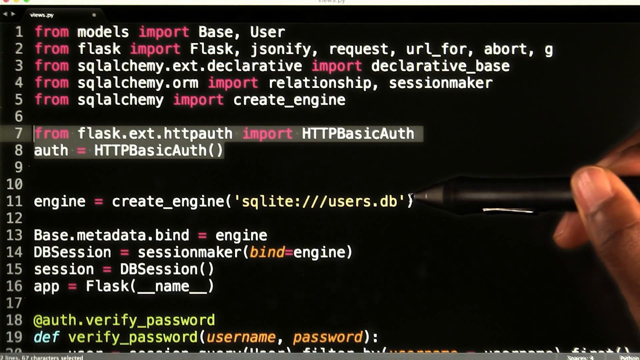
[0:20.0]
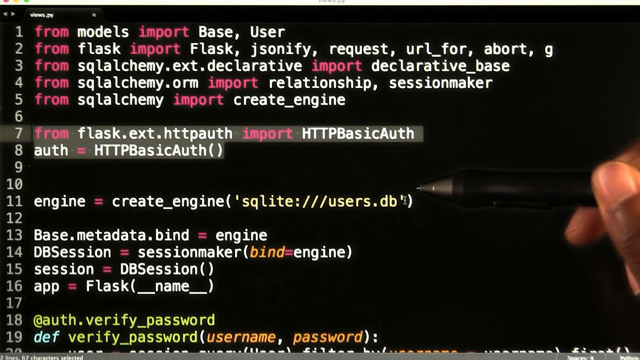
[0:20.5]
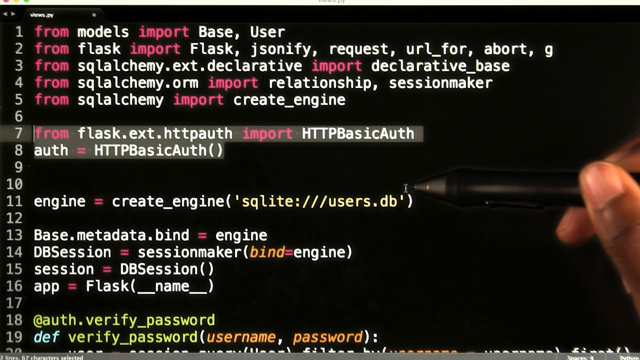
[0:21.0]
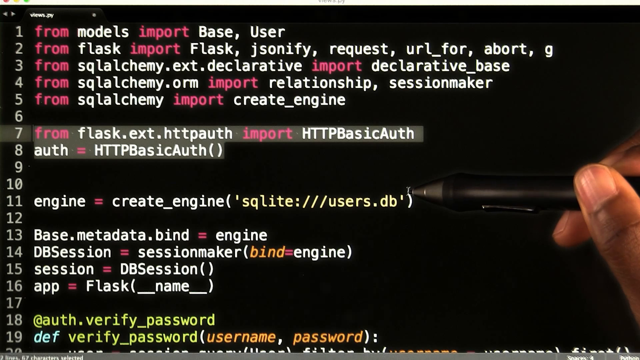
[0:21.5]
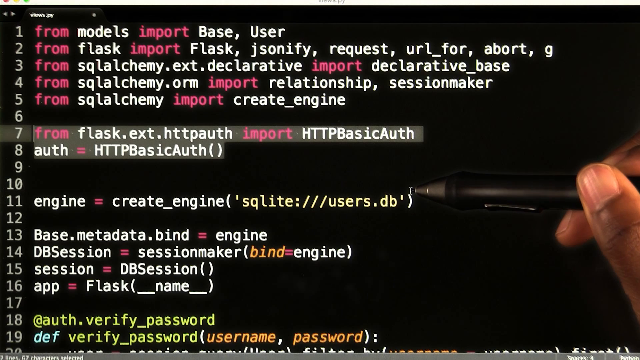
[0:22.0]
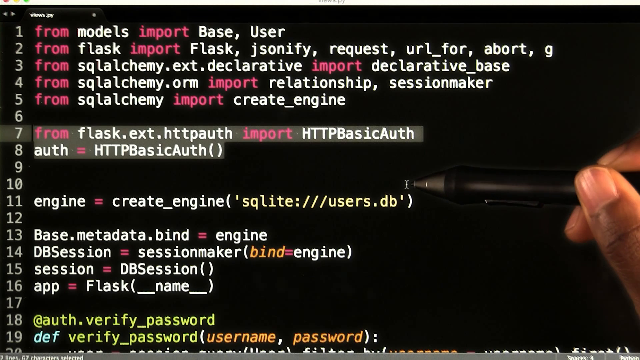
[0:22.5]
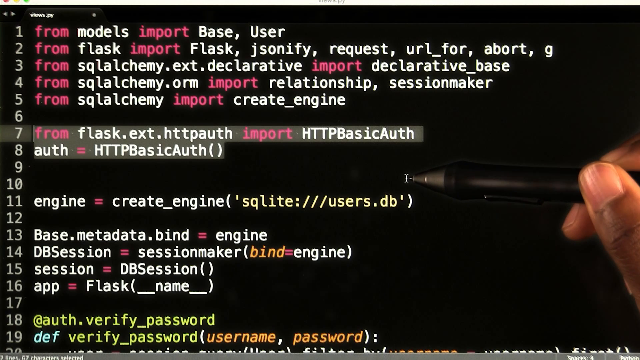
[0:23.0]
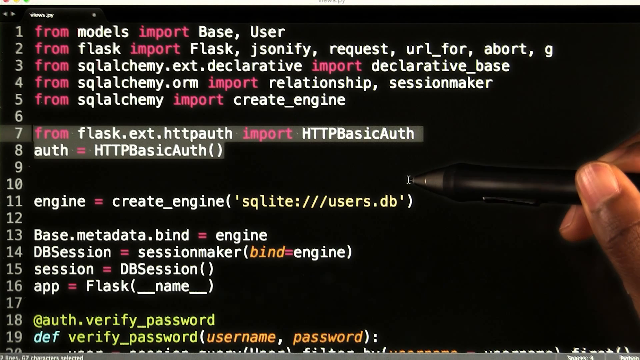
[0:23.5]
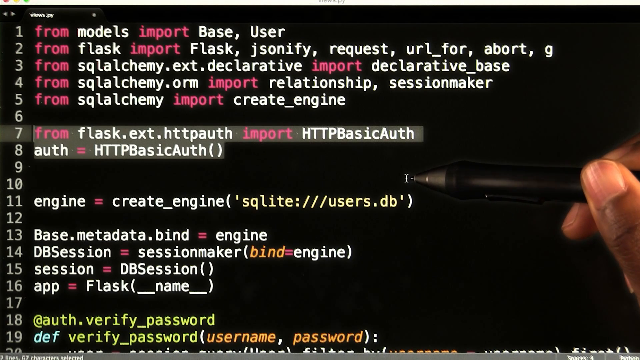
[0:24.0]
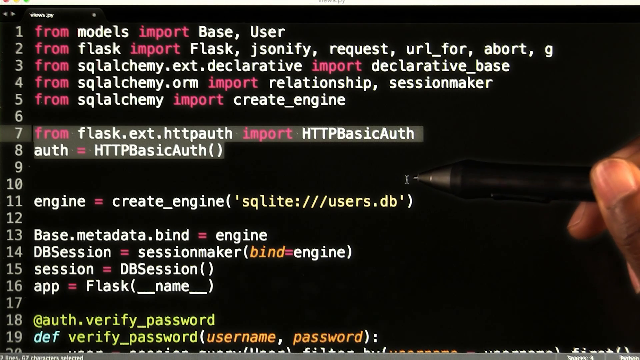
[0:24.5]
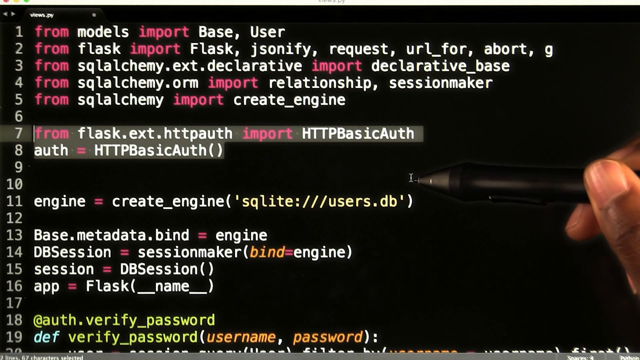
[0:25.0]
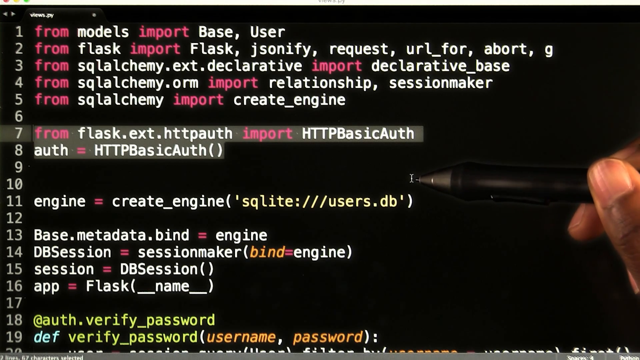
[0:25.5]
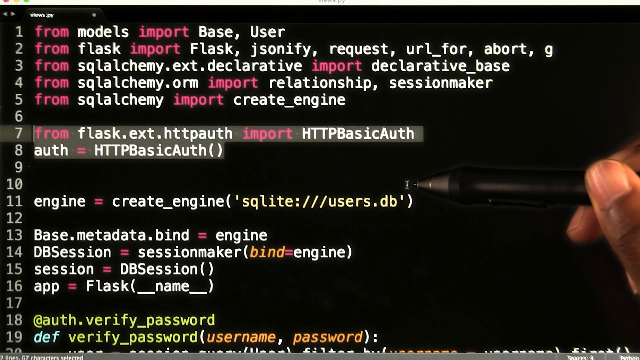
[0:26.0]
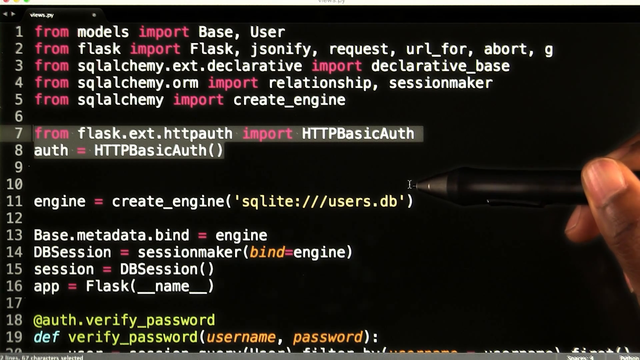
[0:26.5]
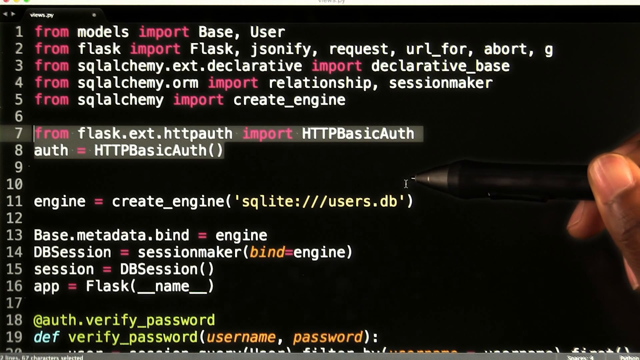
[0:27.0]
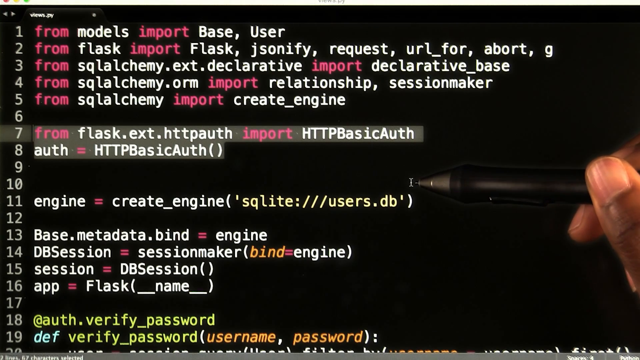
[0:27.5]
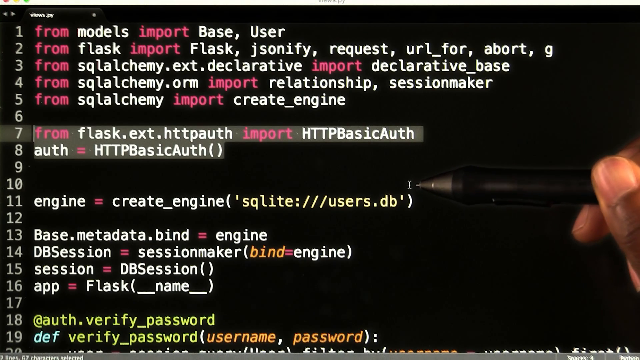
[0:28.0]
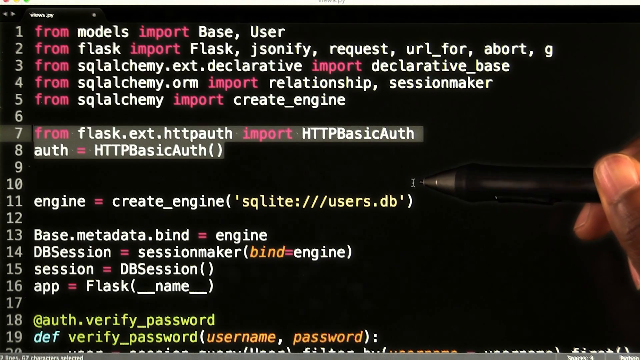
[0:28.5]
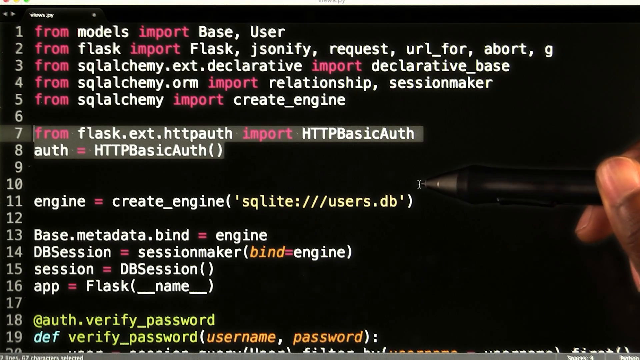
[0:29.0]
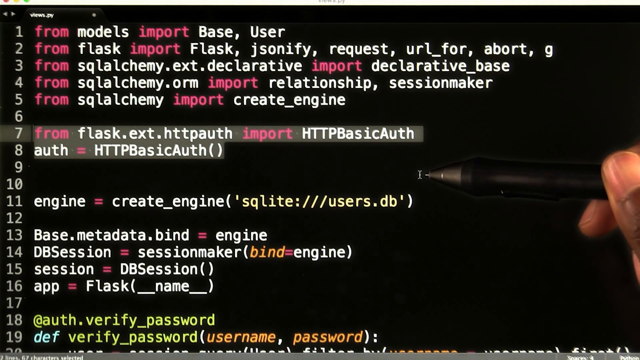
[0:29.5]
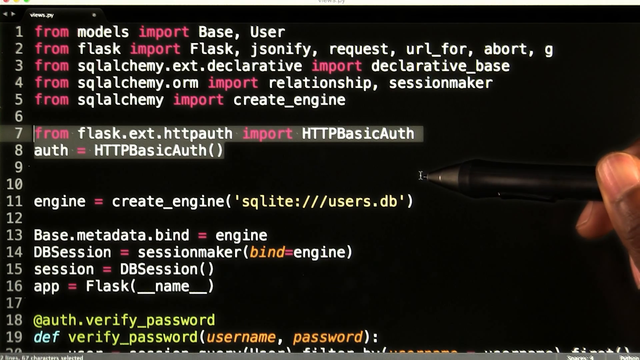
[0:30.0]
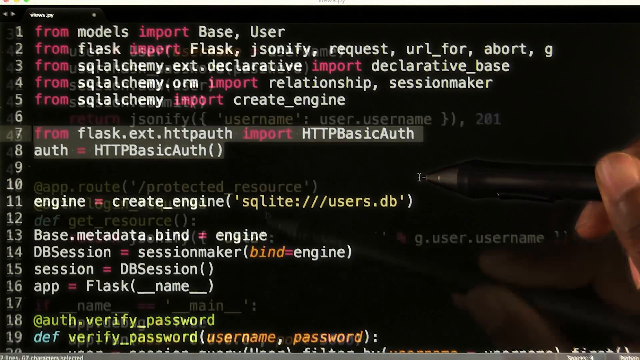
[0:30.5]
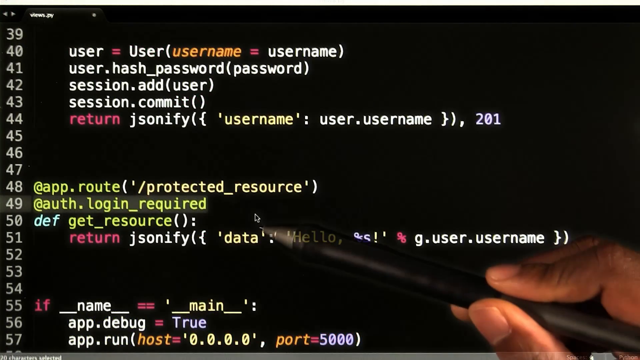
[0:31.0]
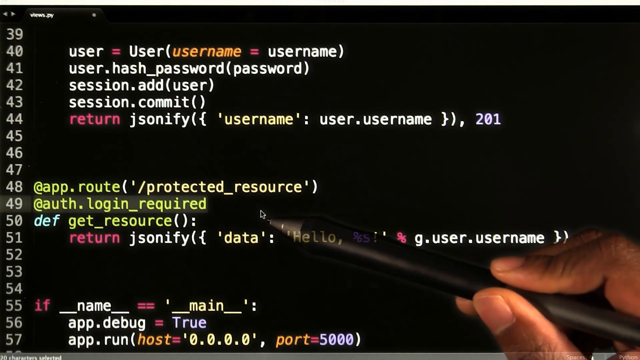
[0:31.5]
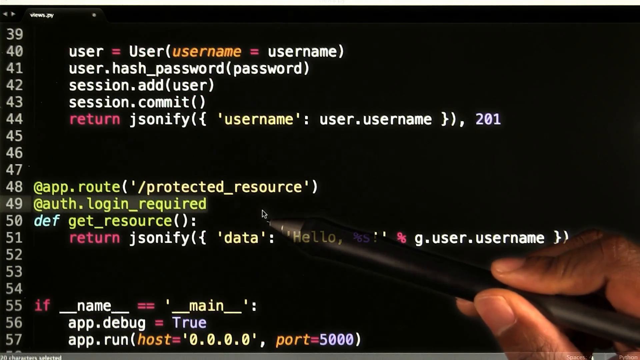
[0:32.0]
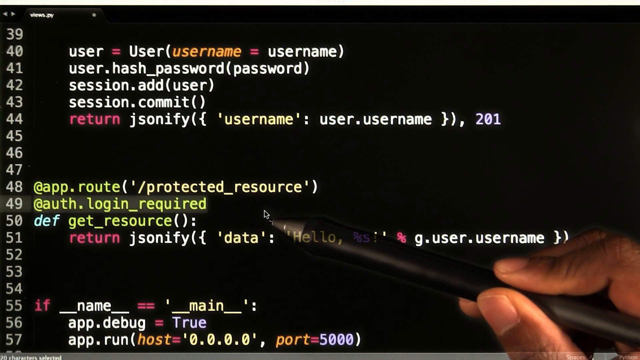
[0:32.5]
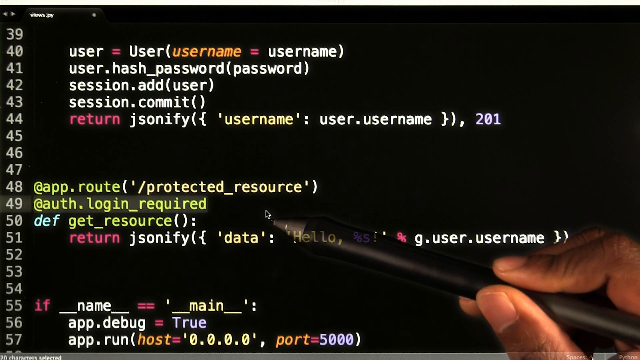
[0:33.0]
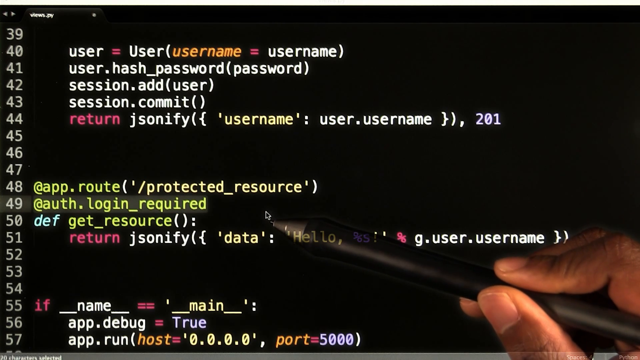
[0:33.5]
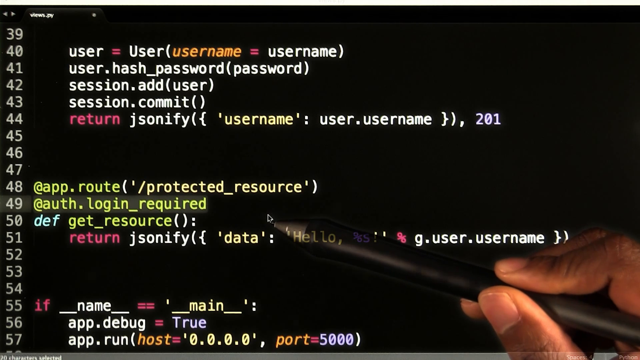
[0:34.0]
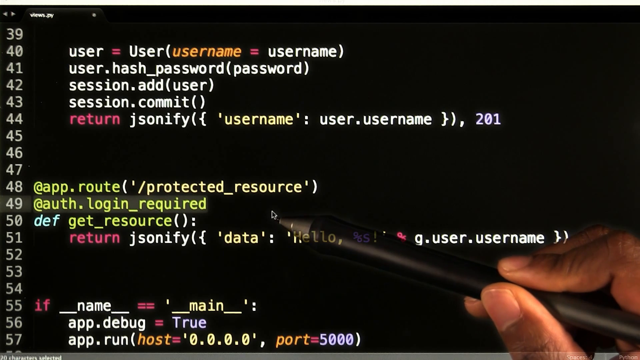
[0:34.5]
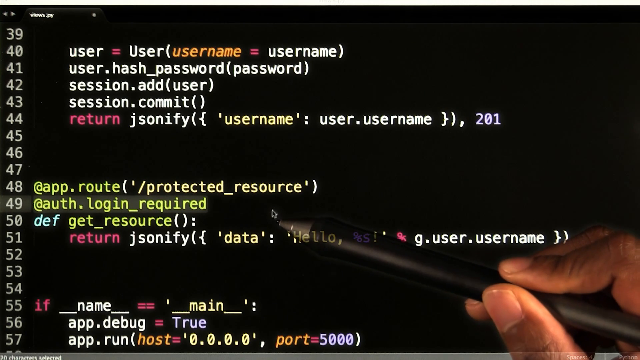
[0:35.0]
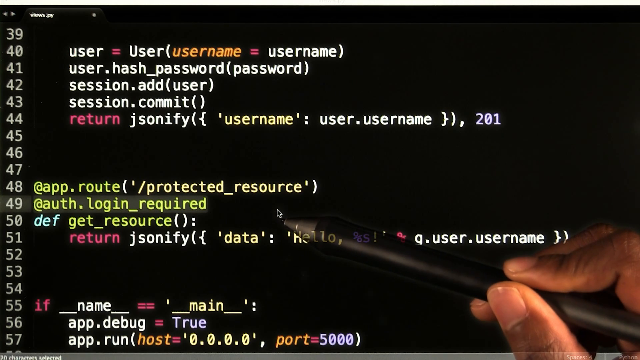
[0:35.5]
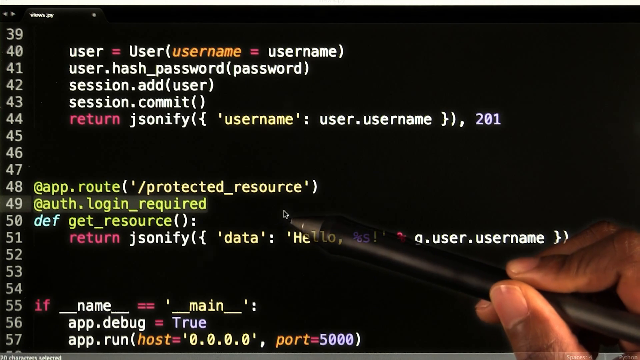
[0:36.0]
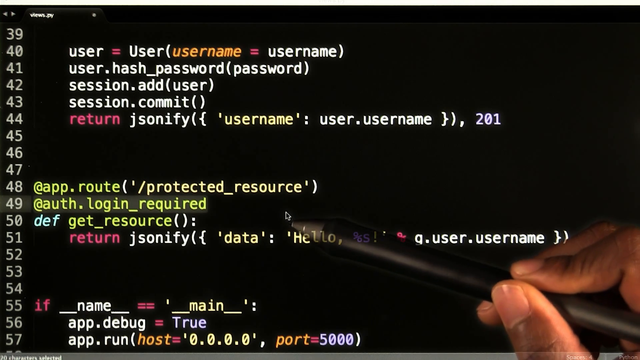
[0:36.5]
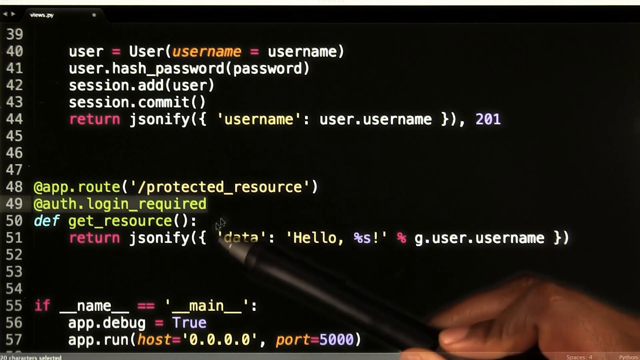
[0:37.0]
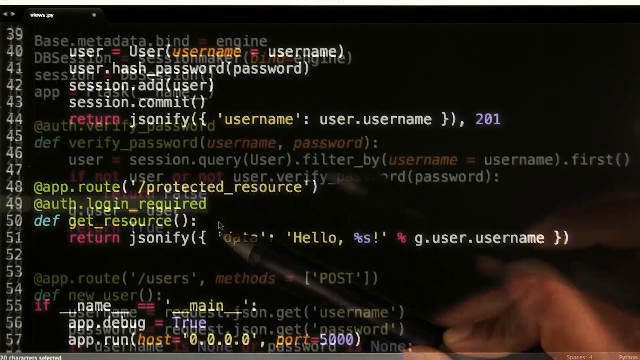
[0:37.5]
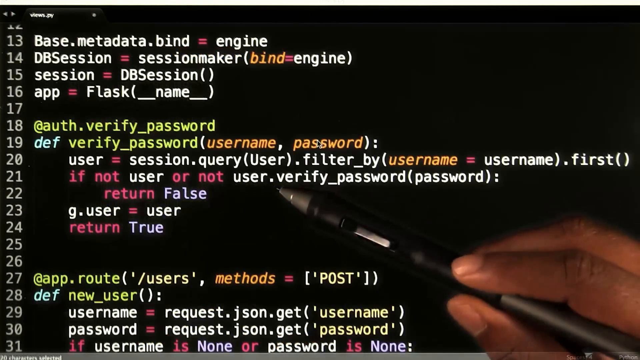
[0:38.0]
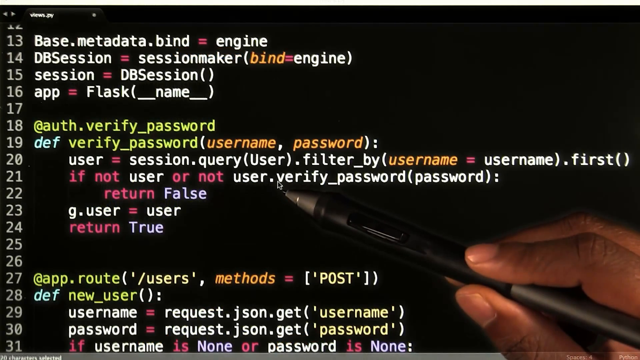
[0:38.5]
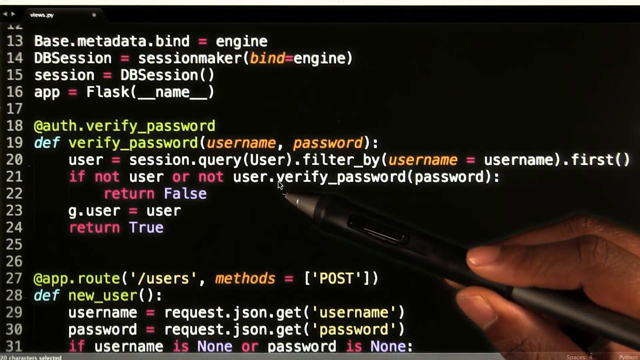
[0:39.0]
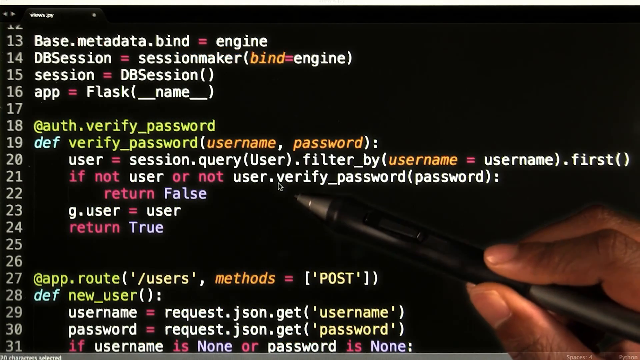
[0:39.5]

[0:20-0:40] On a black screen, the first six lines contain writing, followed by a blank line, two lines of writing, two blank lines, one line of writing, a blank line, four lines of writing, a blank line, and one more visible line of writing. The numbers down the left-hand side go from 1 to 19. The text is in pink and white font, with some highlighted in italic yellow font, and there are some equal signs. A hand on the right-hand side, with its fingers visible, holds a black pen and hovers it over the black part of the screen and then over the word "user.verity".